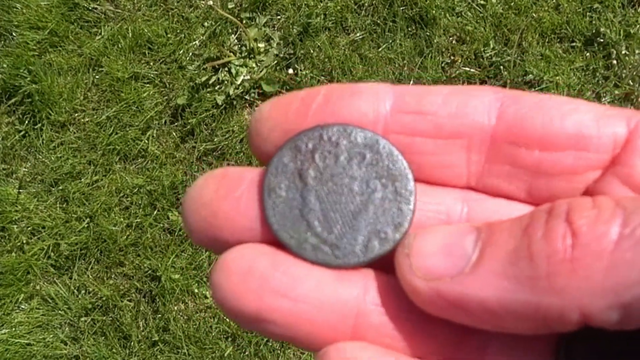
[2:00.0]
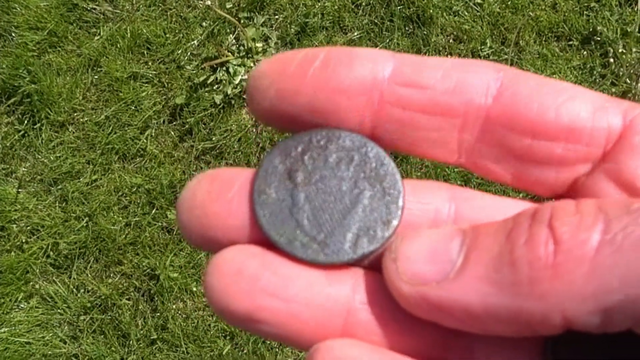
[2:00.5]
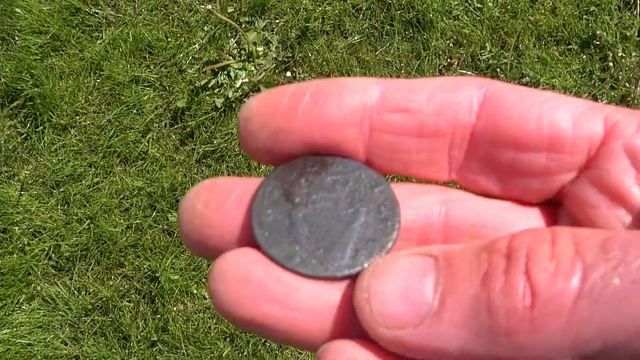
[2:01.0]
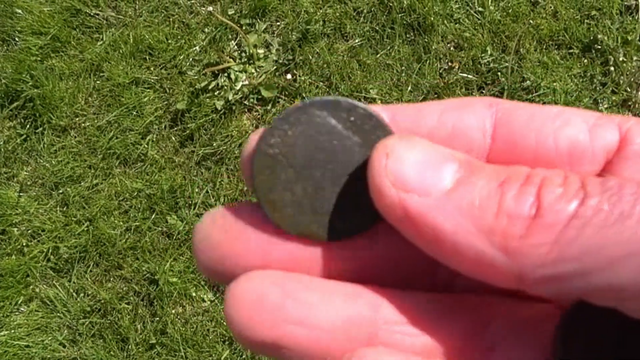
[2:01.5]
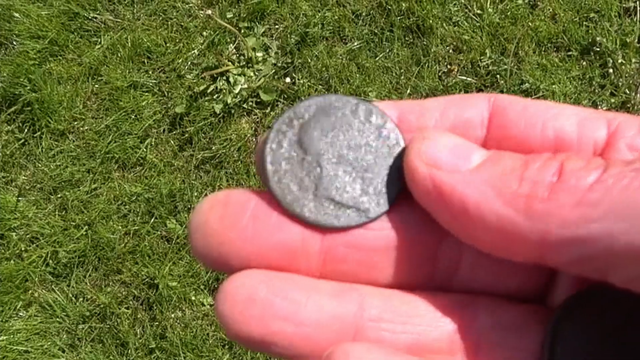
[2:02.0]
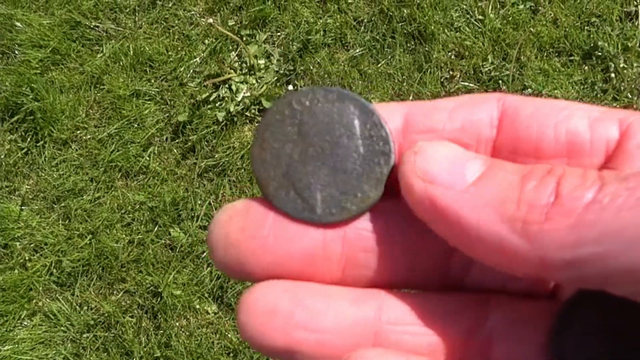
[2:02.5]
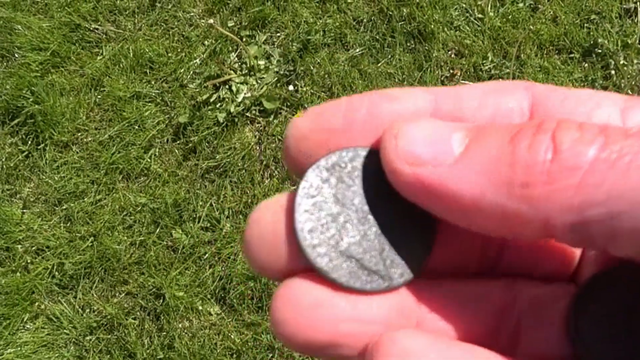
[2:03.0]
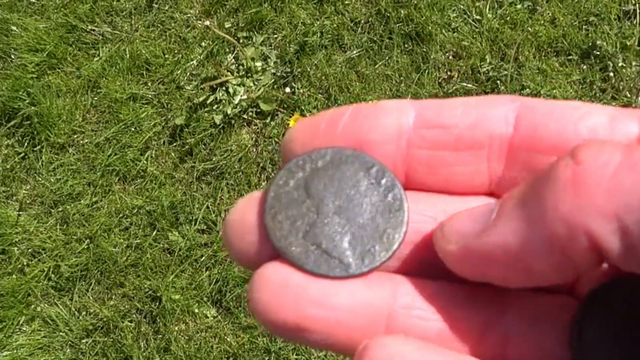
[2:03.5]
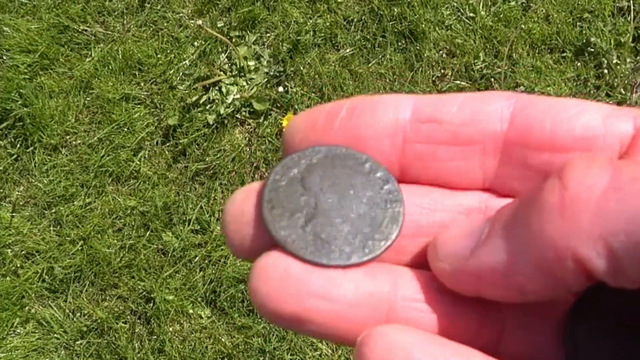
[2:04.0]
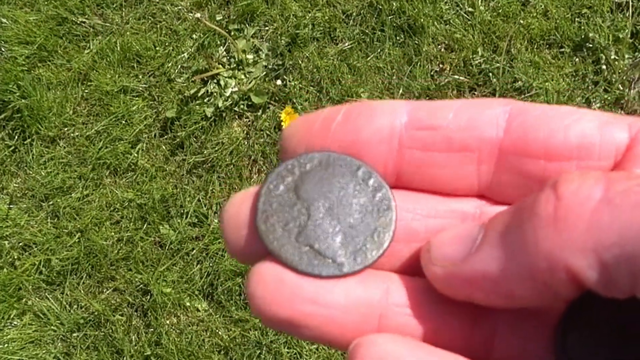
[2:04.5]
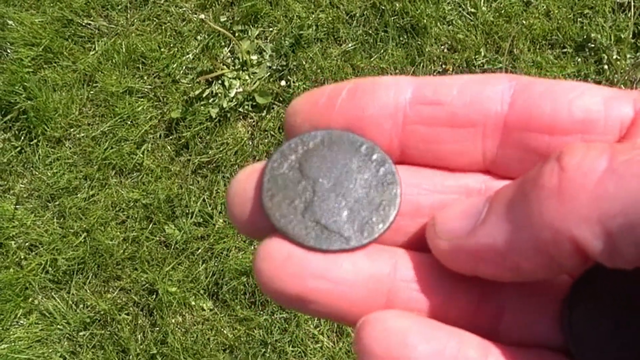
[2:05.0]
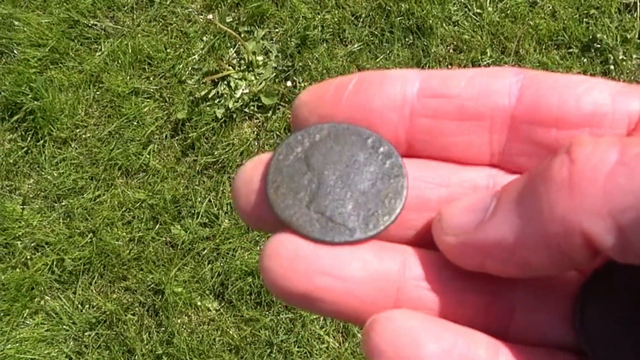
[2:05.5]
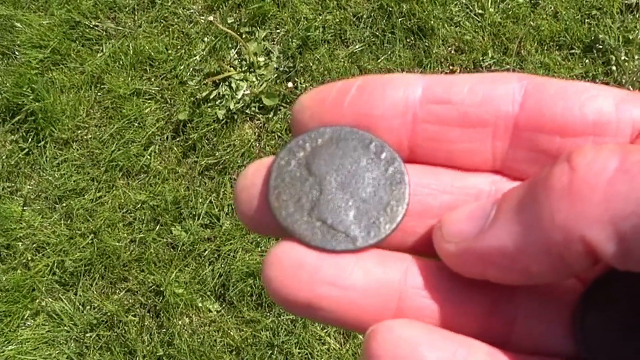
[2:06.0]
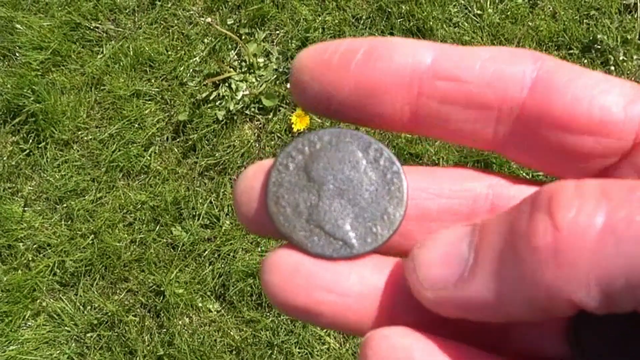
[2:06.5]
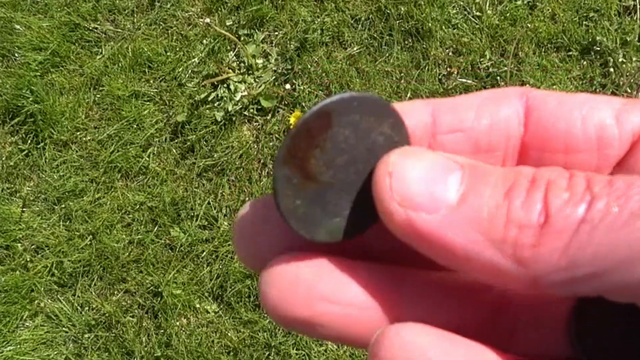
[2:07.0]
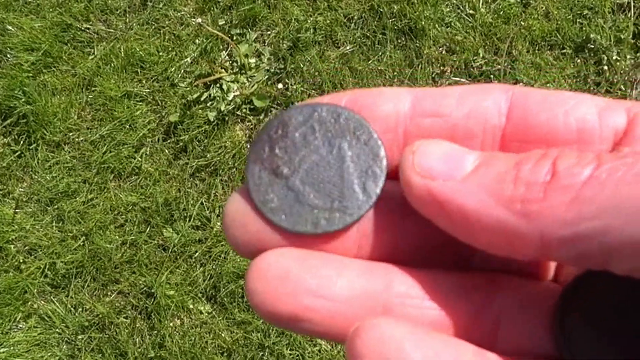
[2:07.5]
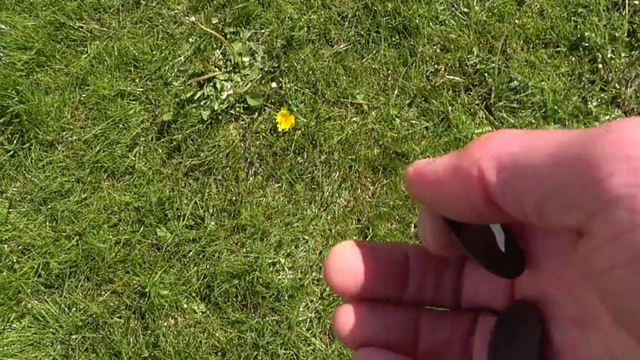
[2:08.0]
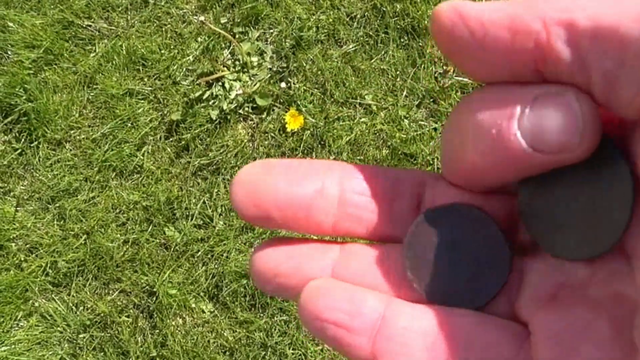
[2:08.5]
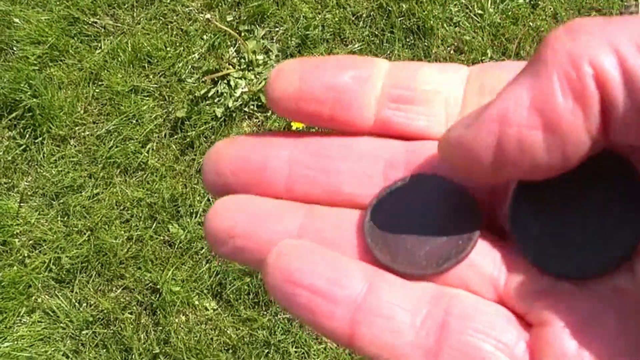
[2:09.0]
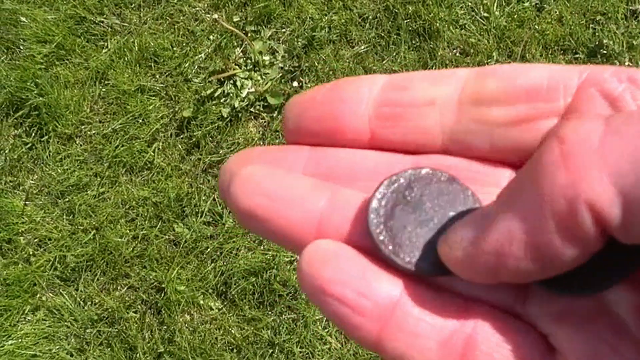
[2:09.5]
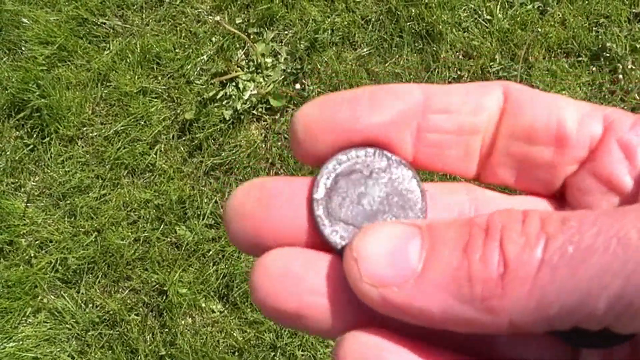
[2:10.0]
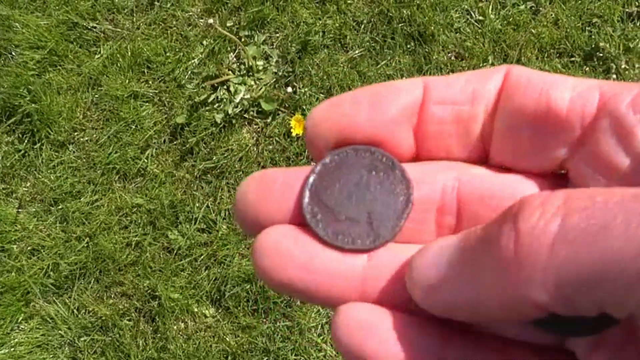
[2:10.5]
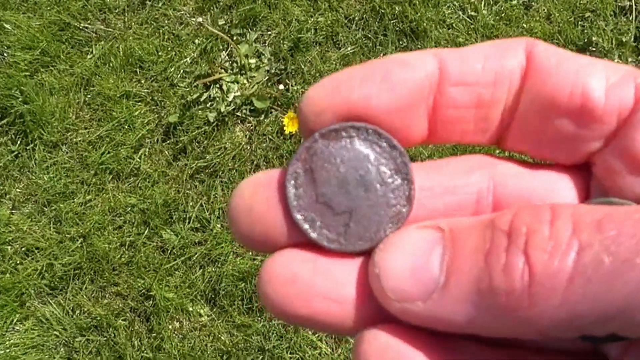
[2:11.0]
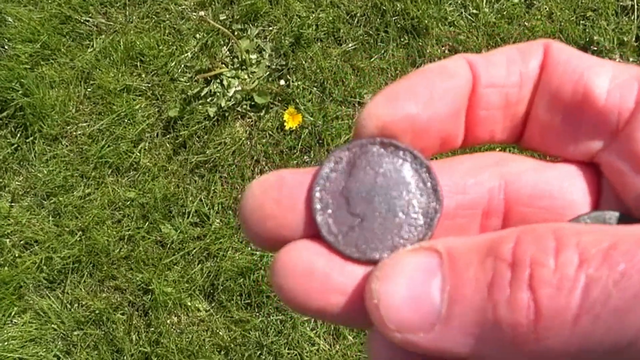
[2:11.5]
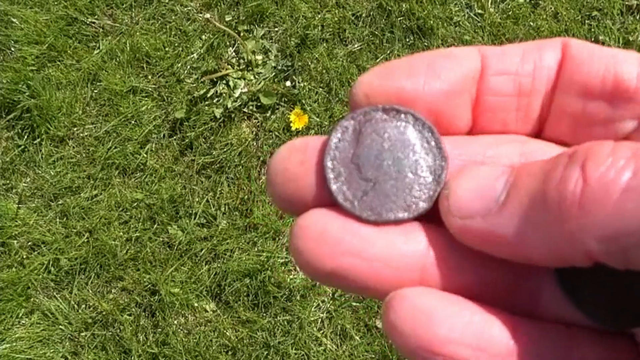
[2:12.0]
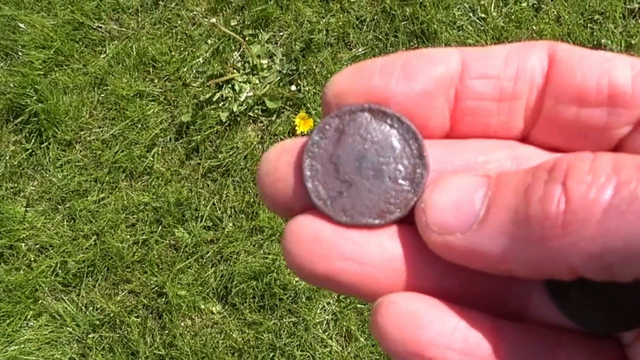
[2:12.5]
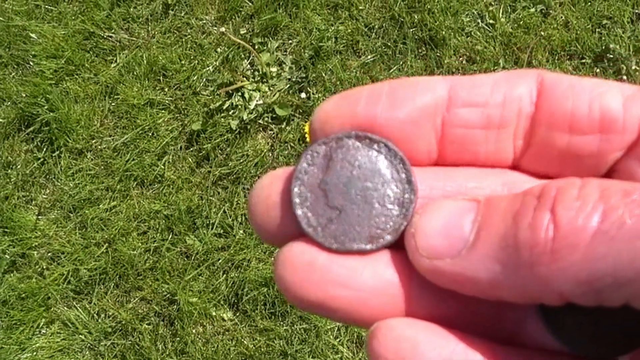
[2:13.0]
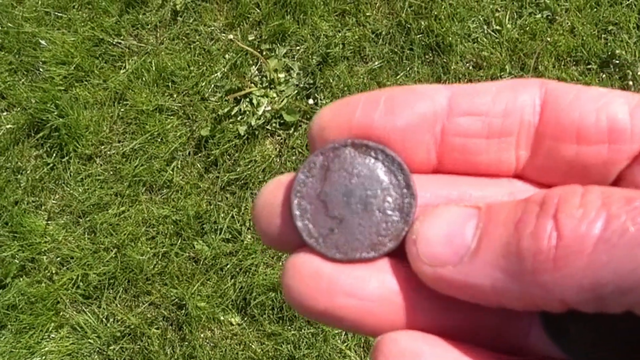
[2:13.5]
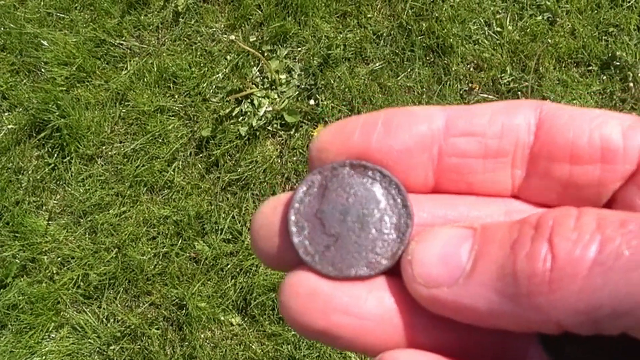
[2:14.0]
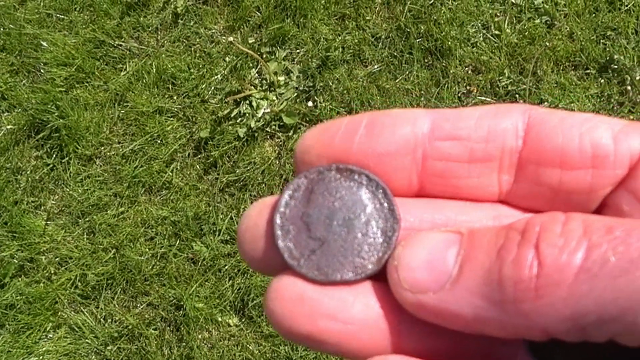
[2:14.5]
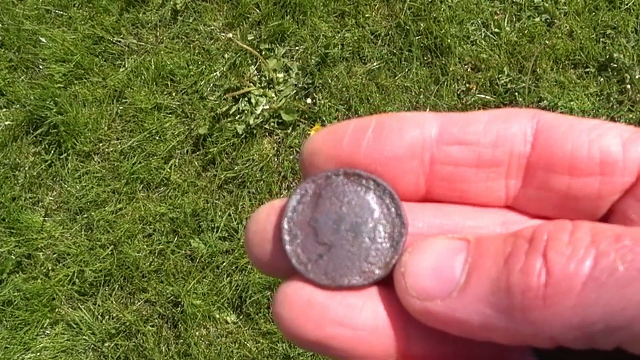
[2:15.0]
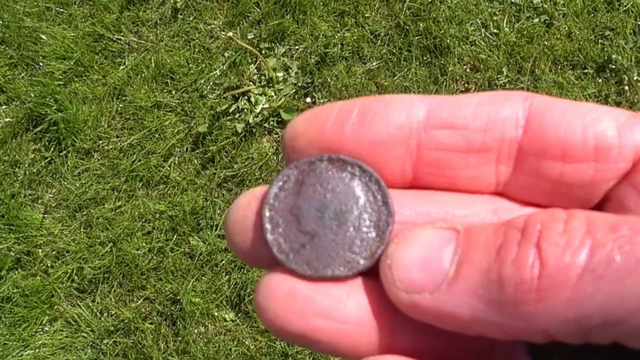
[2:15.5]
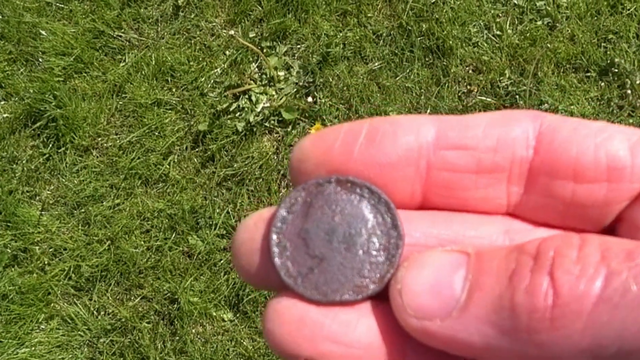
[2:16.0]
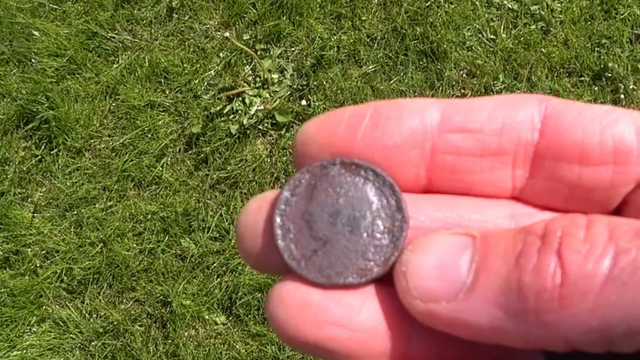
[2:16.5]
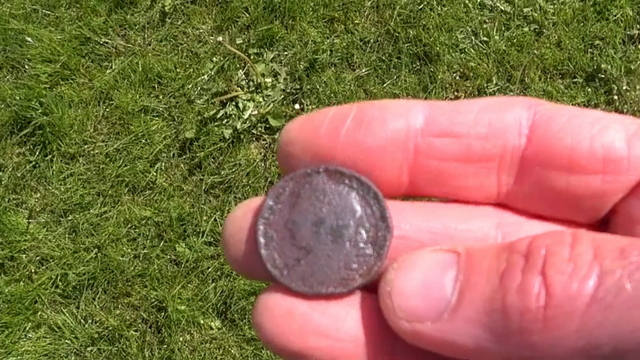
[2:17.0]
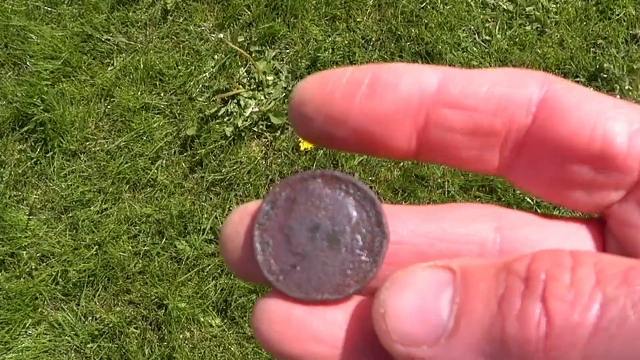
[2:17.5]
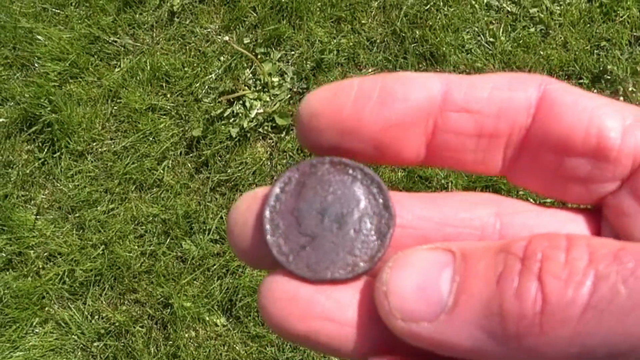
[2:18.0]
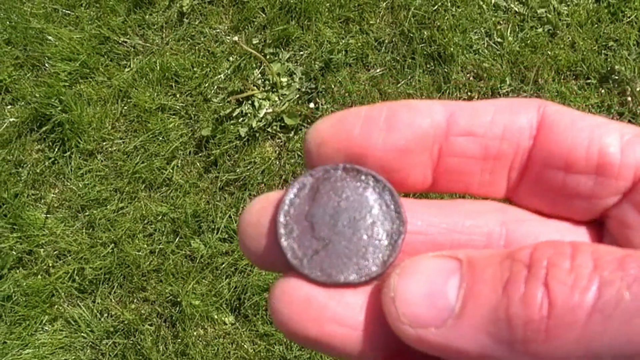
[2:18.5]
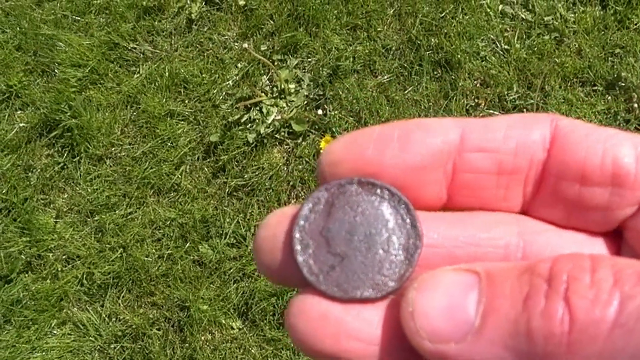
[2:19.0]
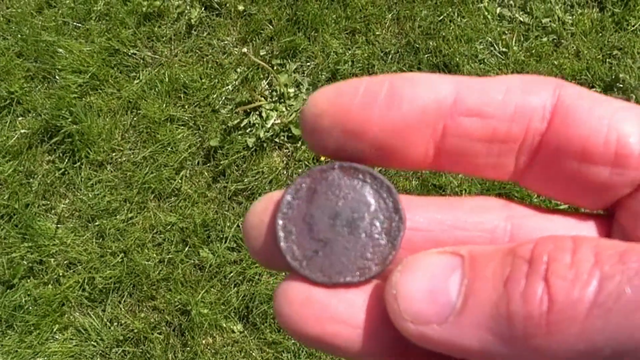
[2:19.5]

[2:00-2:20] The shot starts on the side of the coin with the harp, and the fingers quickly flip it over to show the other side, which appears to be another royal head, this time facing the right of the frame, with indistinguishable writing around the edge. The in-focus grass in the background dominates the frame, and the man's right hand comes in from the right, taking up the right and lower half of the frame. The hand rotates the coins a little and rocks them back and forth so the light shines off them. He flips the coin back to the harp, then returns to the first coin, with the head facing the left, and rocks it back and forth. At one point all four fingers and the thumb are visible as he fumbles with the coins.